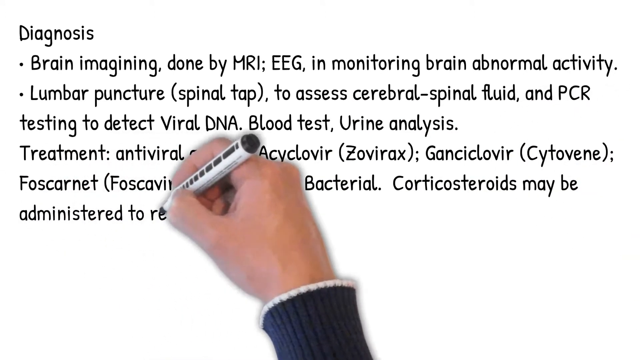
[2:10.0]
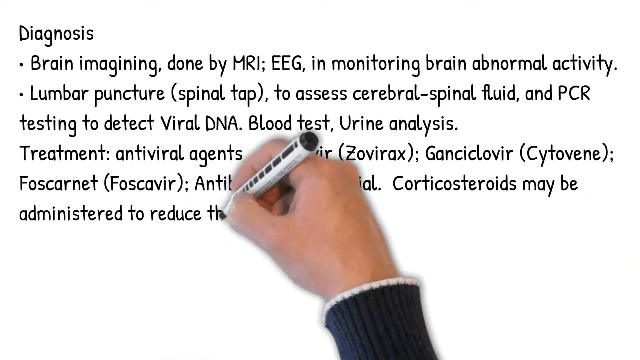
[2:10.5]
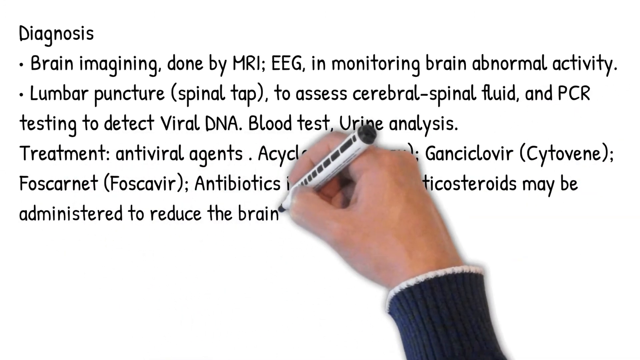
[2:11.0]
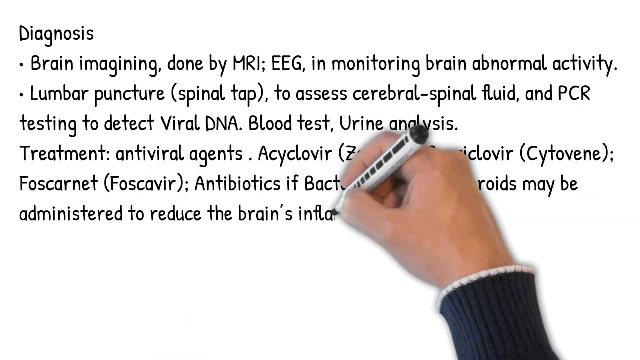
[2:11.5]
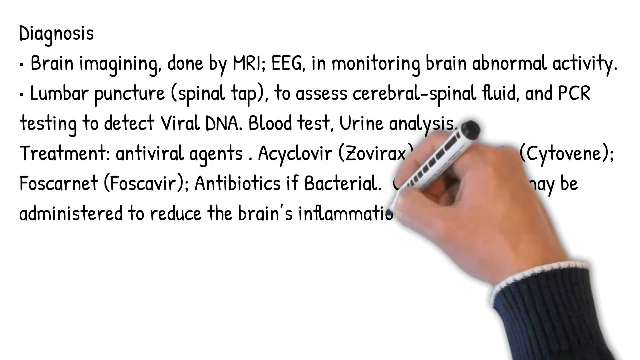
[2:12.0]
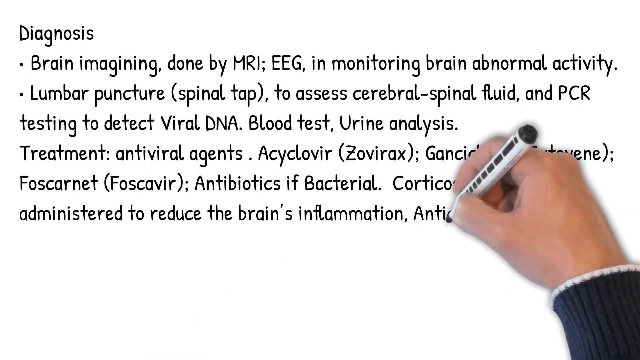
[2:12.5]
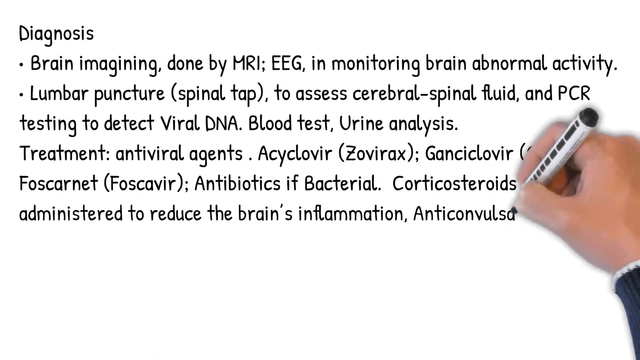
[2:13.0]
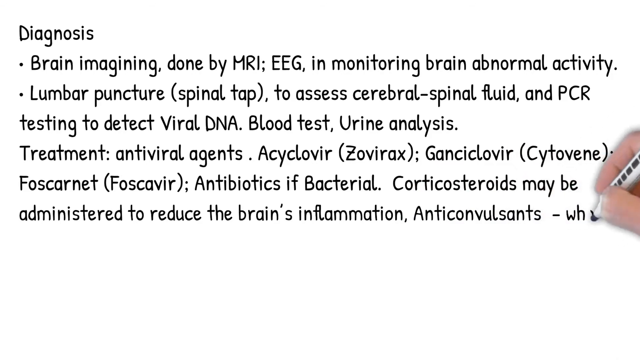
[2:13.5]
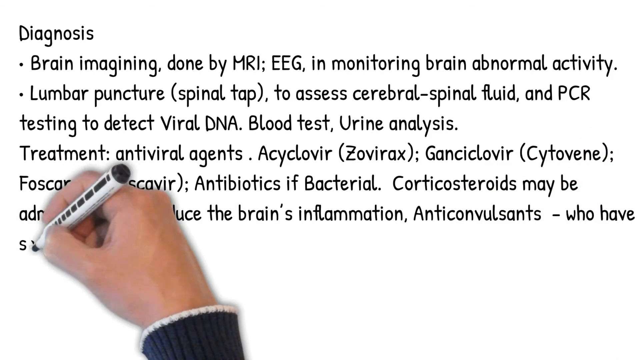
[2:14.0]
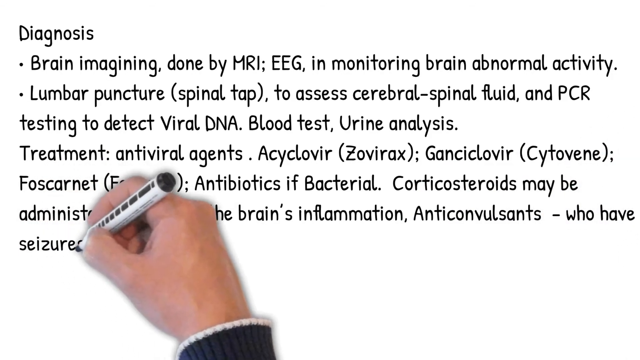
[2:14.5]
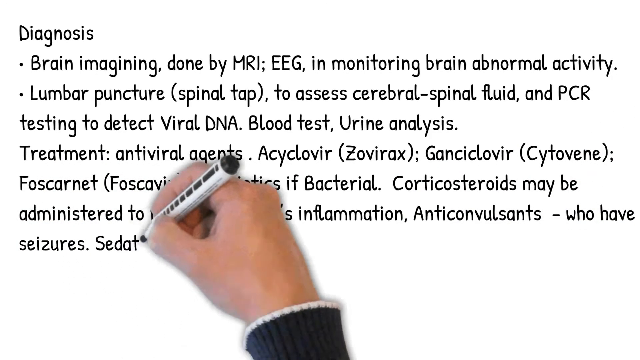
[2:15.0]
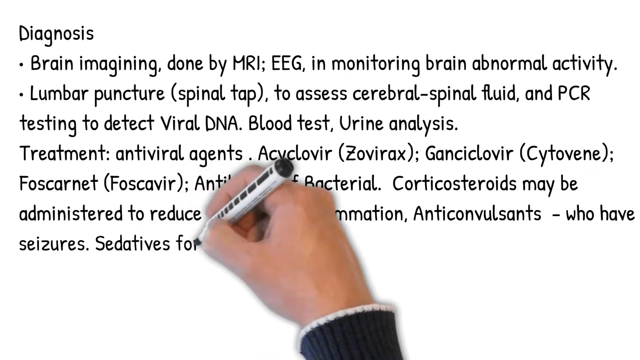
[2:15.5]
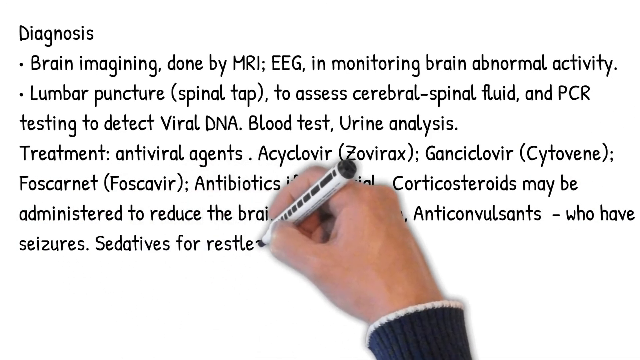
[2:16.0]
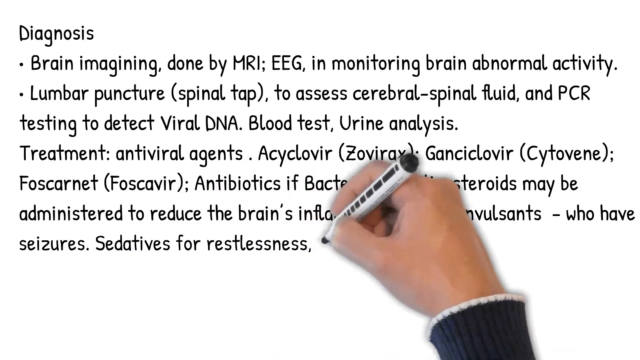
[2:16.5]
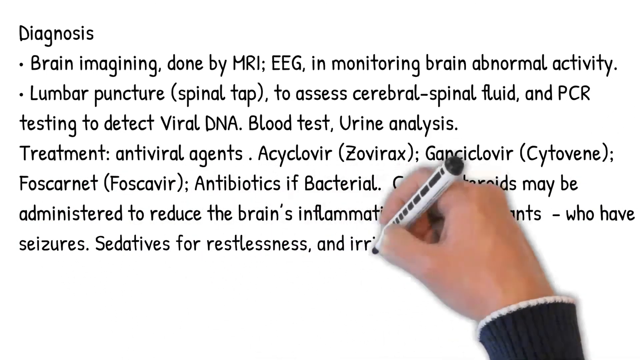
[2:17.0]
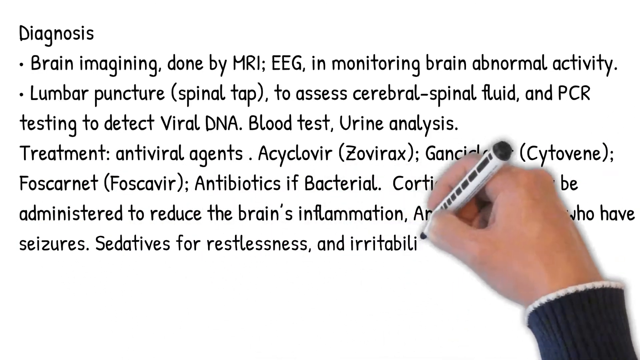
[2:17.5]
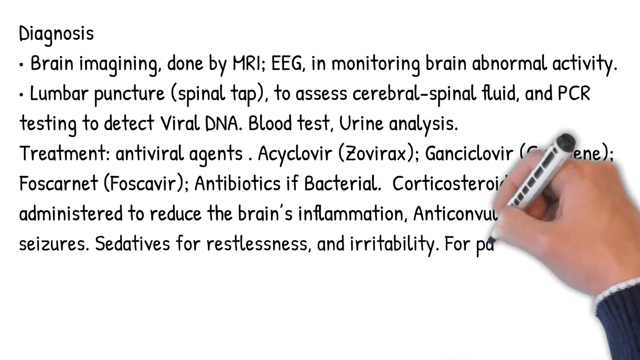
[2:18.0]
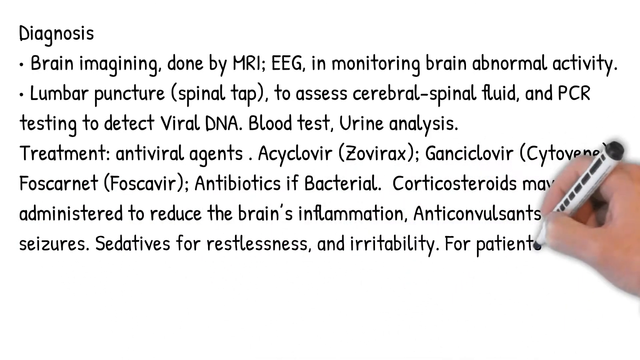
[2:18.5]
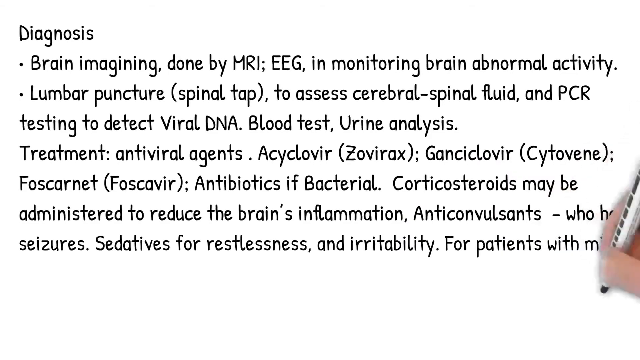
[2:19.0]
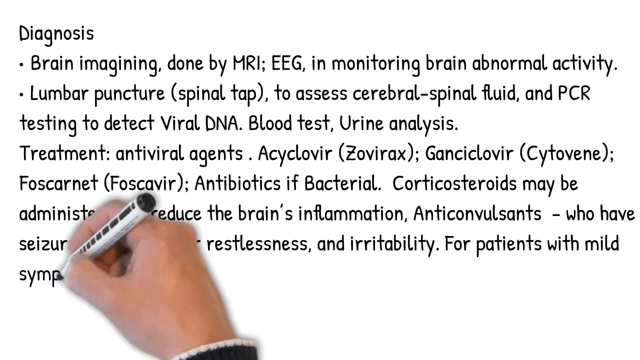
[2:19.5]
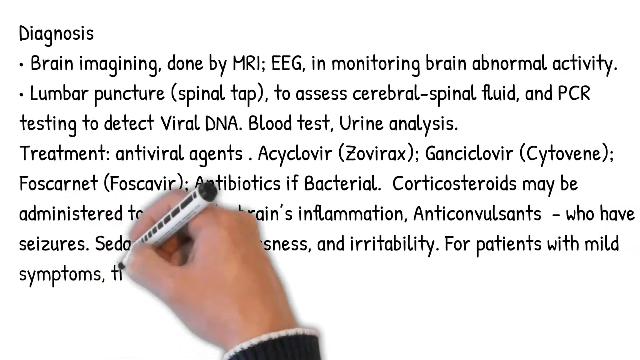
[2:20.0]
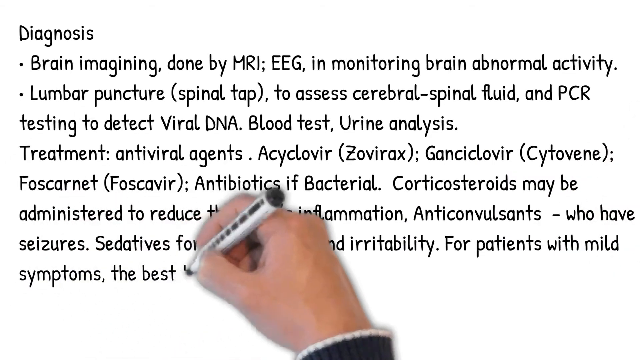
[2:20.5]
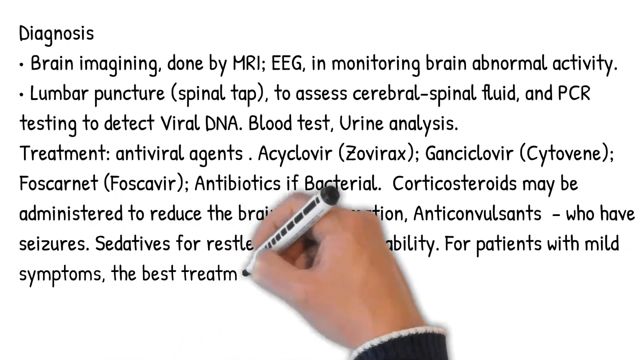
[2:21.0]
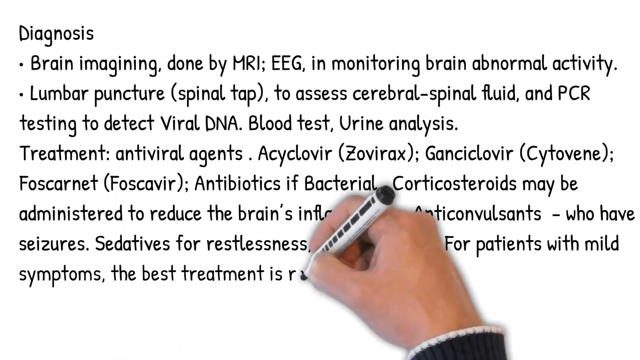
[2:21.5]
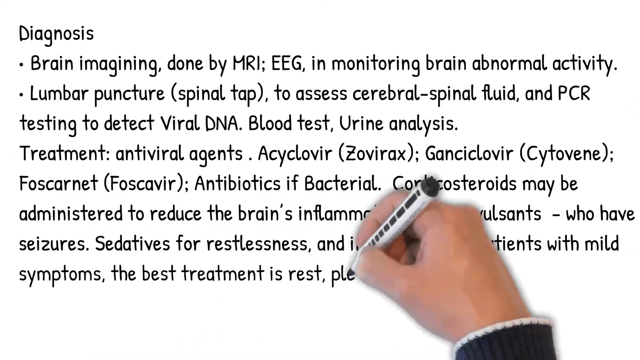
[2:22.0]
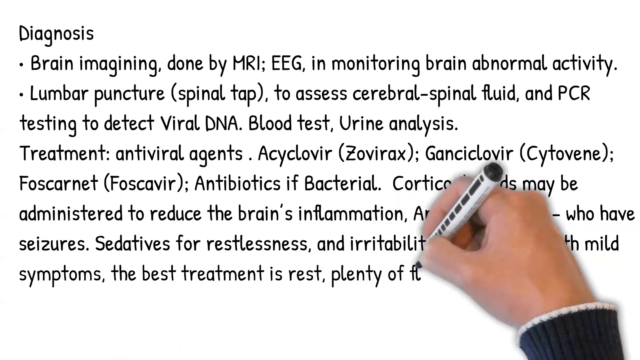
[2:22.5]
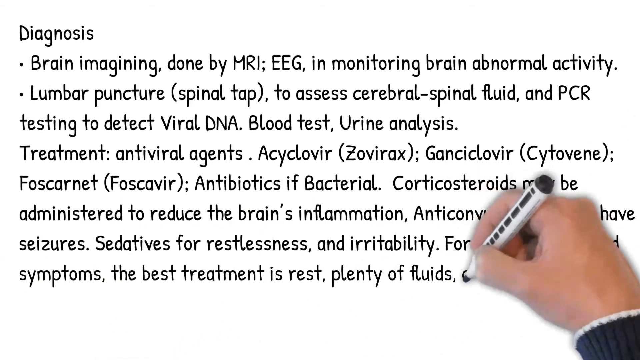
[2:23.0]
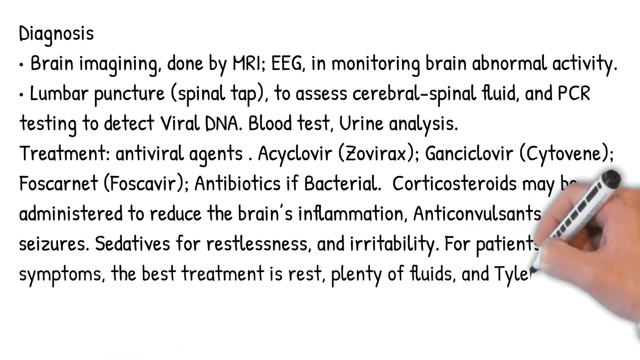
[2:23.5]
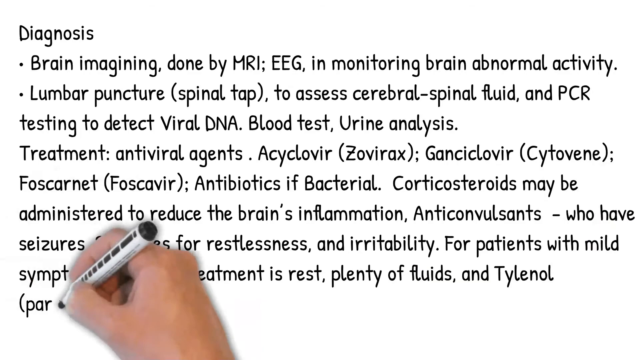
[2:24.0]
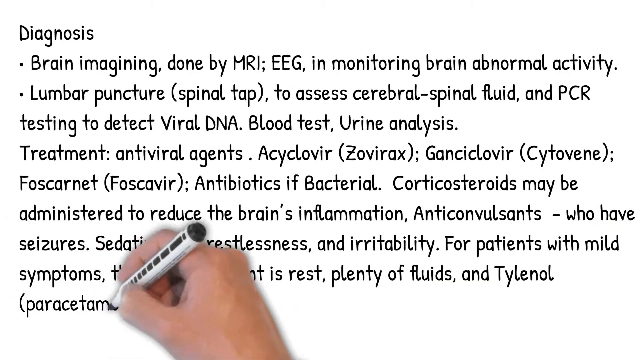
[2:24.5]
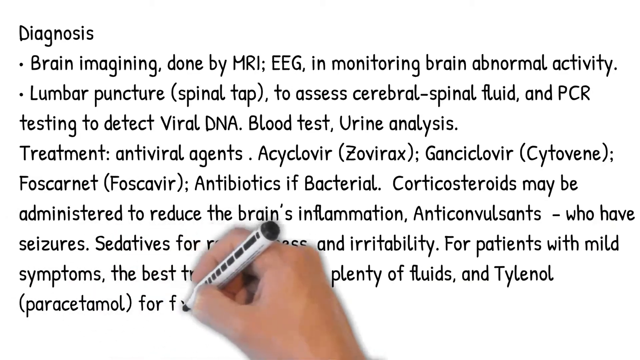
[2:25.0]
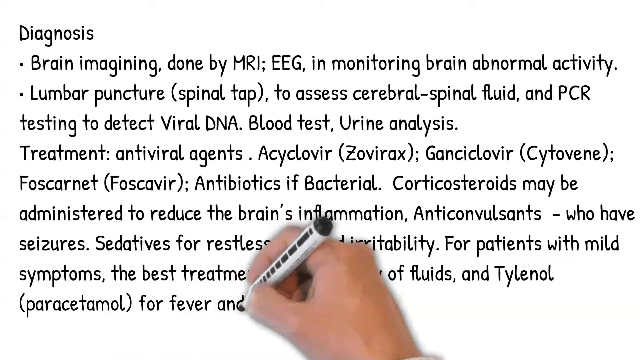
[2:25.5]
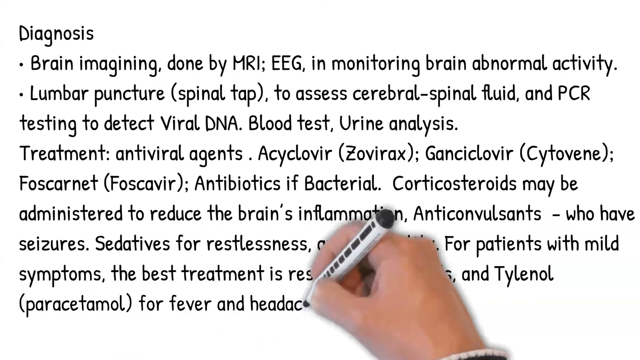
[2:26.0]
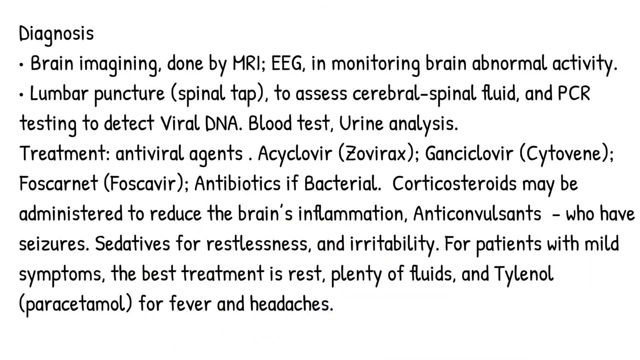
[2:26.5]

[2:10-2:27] The treatment notes continue: corticosteroids may be administered to reduce the inflammation, anticonvulsants help if people are having seizures, and a sedative can calm restlessness and irritability. For patients with mild symptoms, the best treatment is rest, plenty of fluids, and Tylenol for fever and headaches.